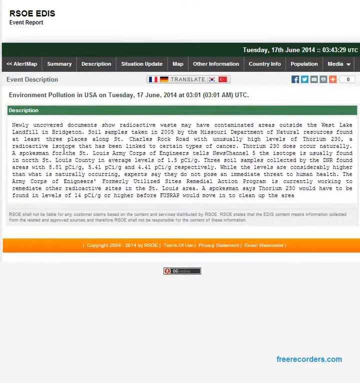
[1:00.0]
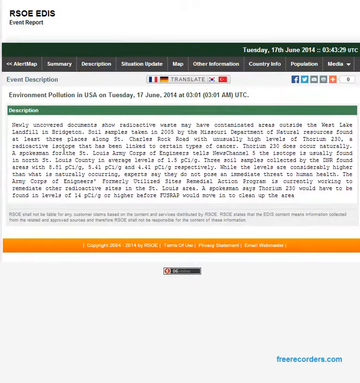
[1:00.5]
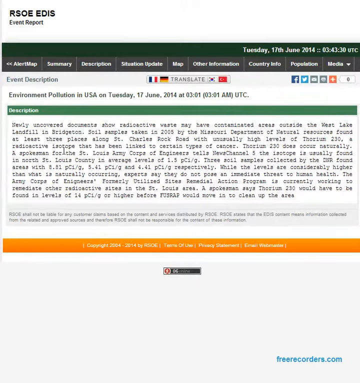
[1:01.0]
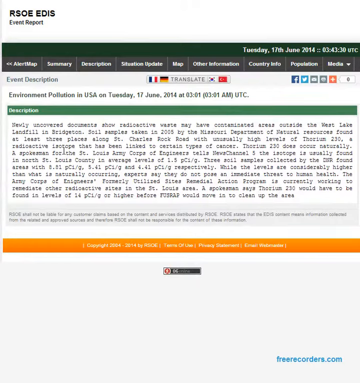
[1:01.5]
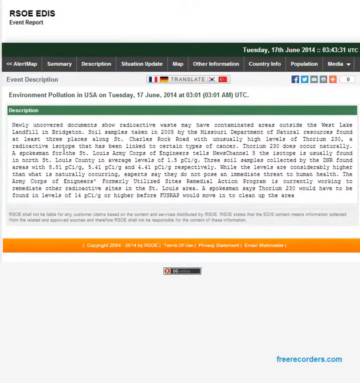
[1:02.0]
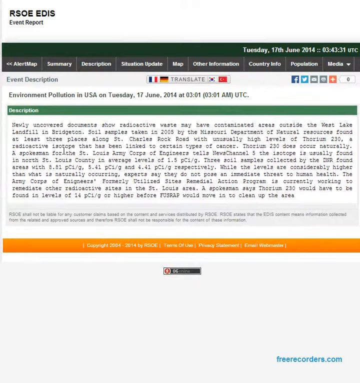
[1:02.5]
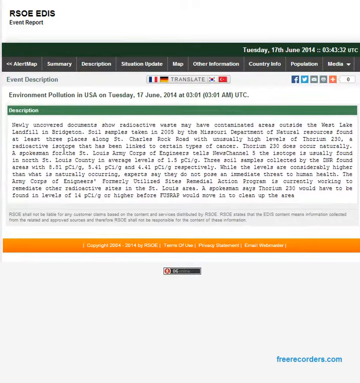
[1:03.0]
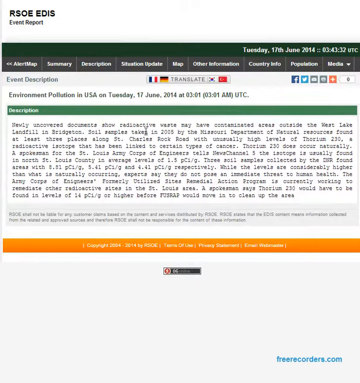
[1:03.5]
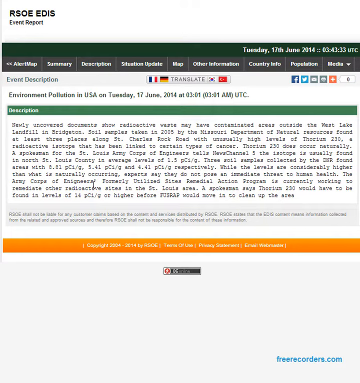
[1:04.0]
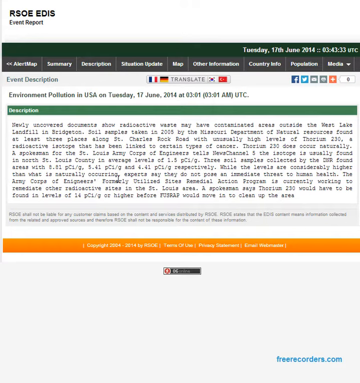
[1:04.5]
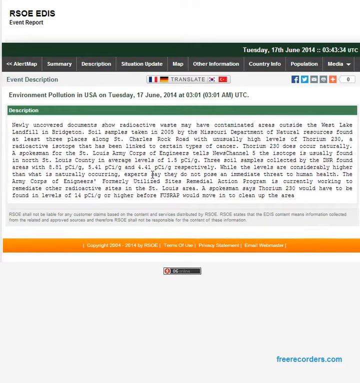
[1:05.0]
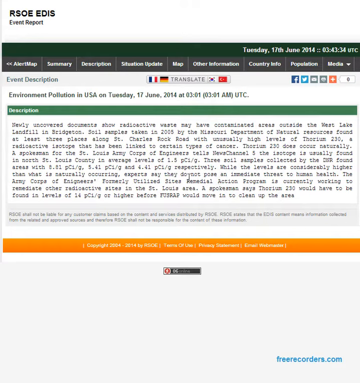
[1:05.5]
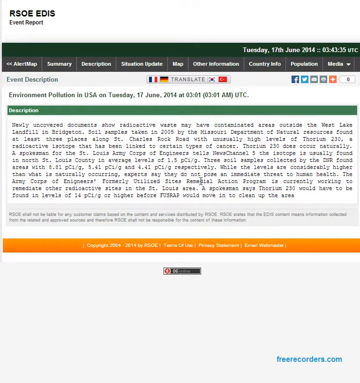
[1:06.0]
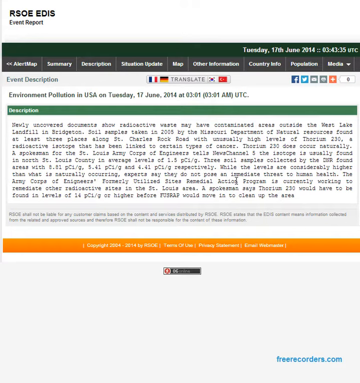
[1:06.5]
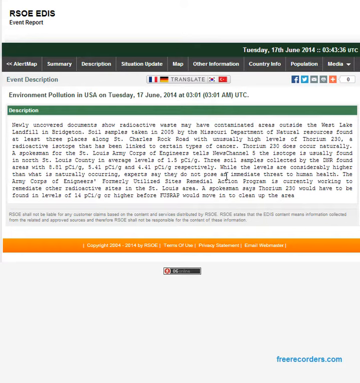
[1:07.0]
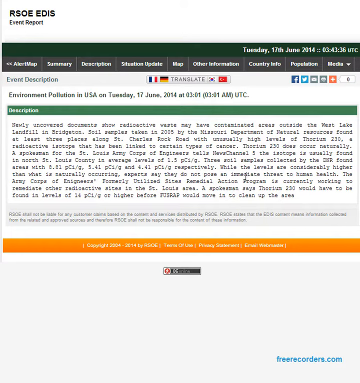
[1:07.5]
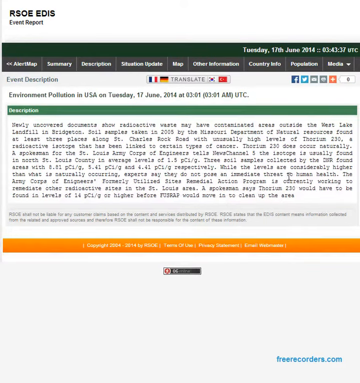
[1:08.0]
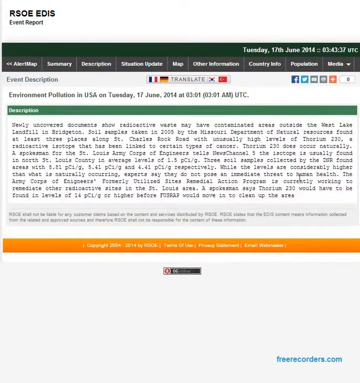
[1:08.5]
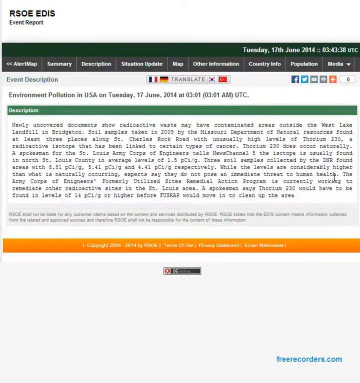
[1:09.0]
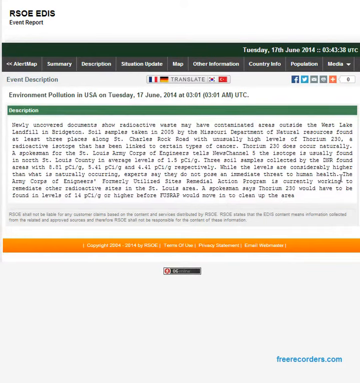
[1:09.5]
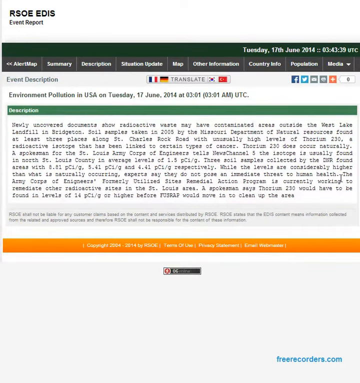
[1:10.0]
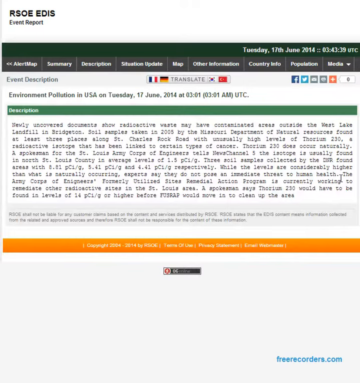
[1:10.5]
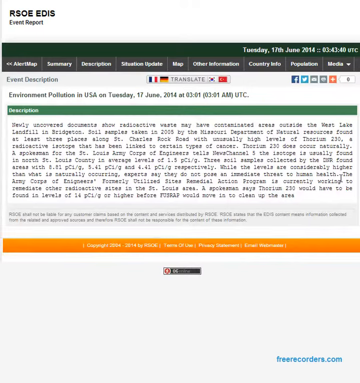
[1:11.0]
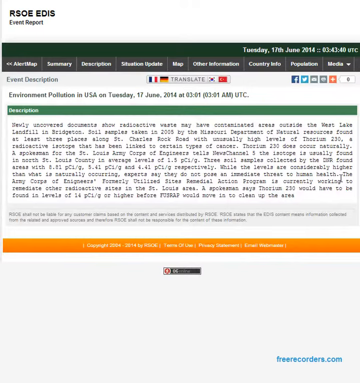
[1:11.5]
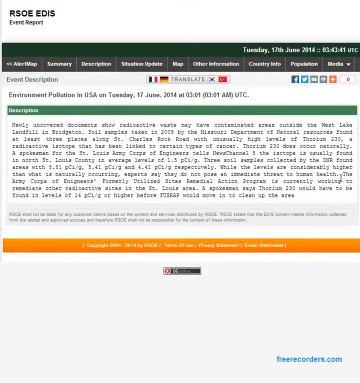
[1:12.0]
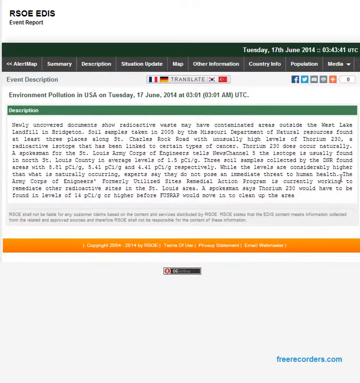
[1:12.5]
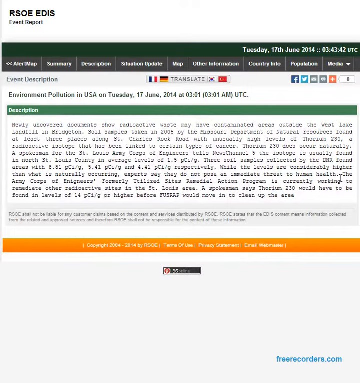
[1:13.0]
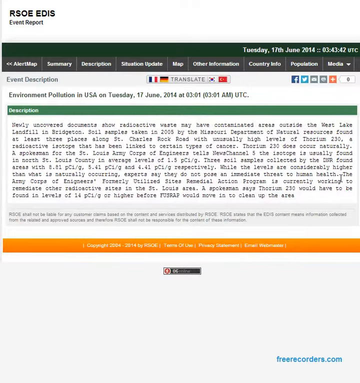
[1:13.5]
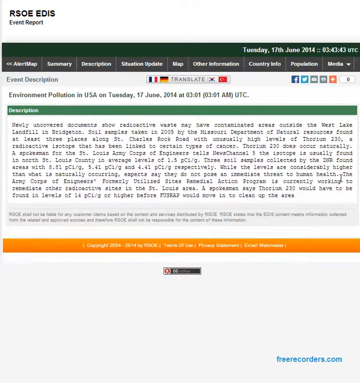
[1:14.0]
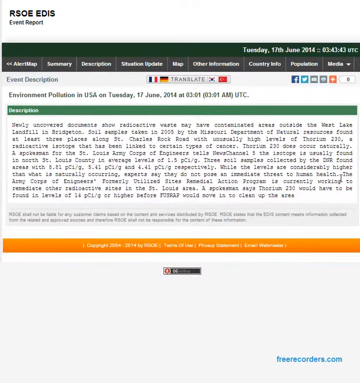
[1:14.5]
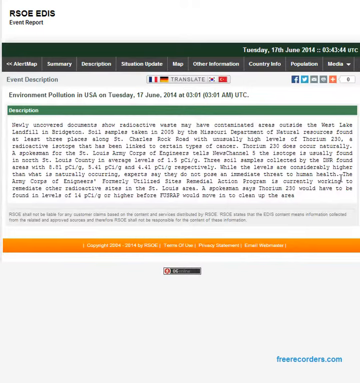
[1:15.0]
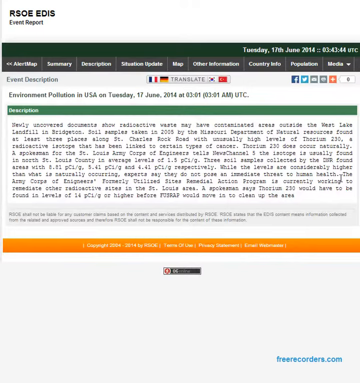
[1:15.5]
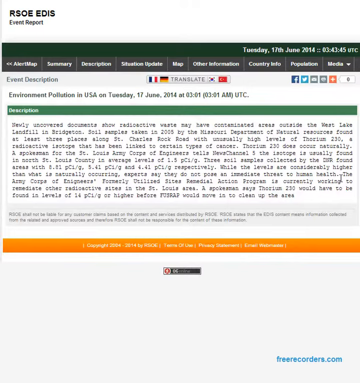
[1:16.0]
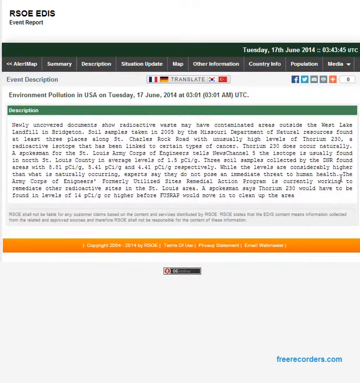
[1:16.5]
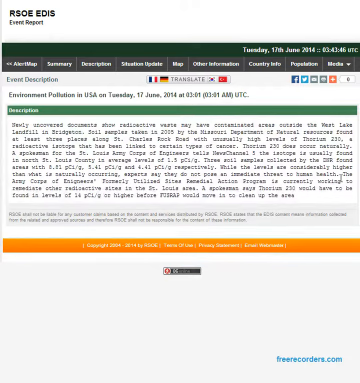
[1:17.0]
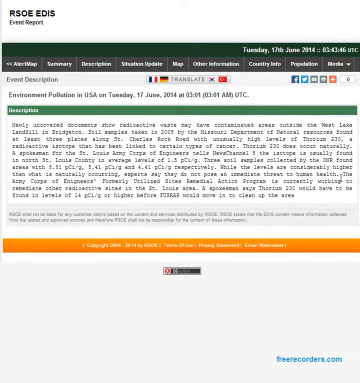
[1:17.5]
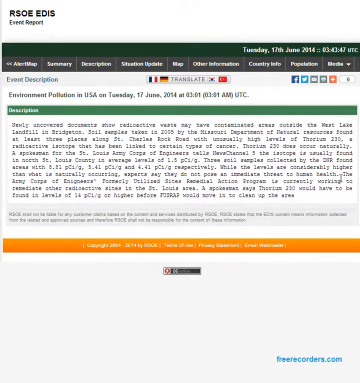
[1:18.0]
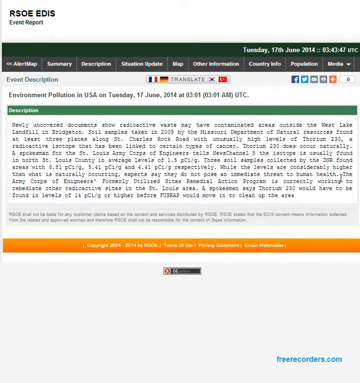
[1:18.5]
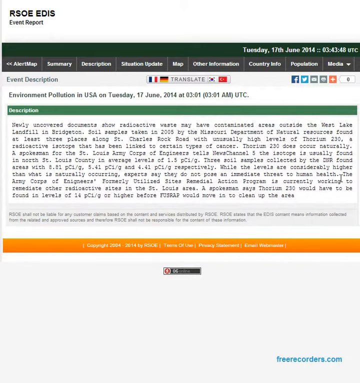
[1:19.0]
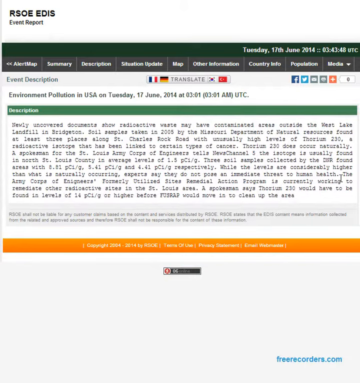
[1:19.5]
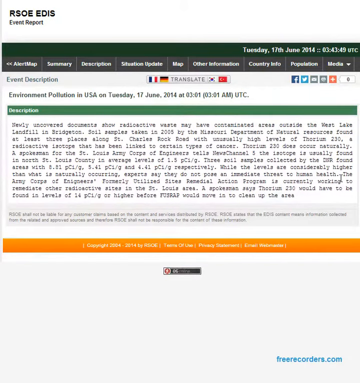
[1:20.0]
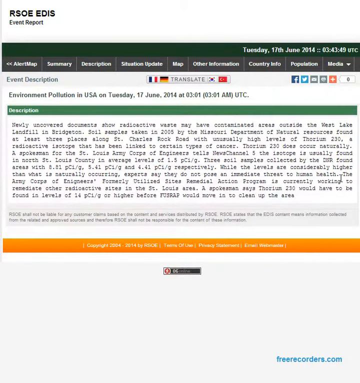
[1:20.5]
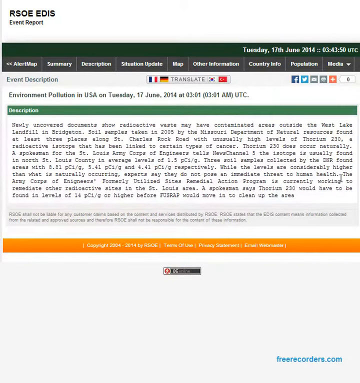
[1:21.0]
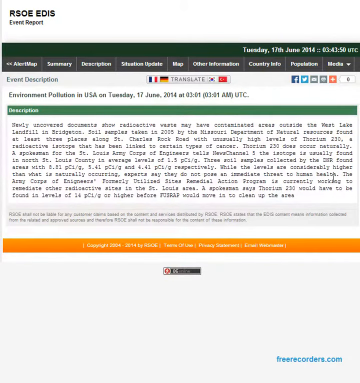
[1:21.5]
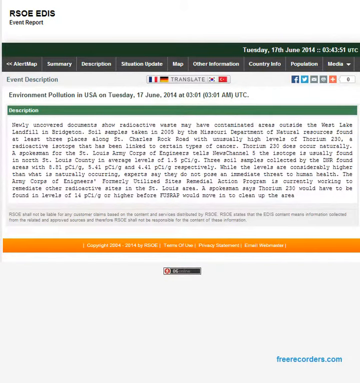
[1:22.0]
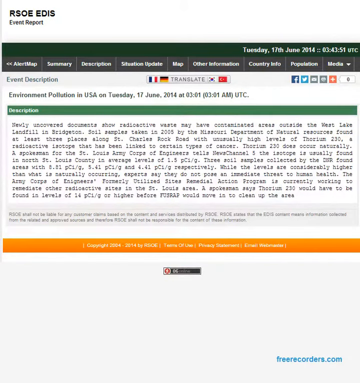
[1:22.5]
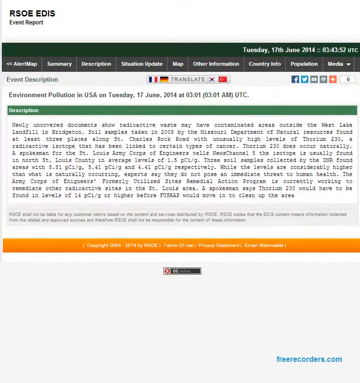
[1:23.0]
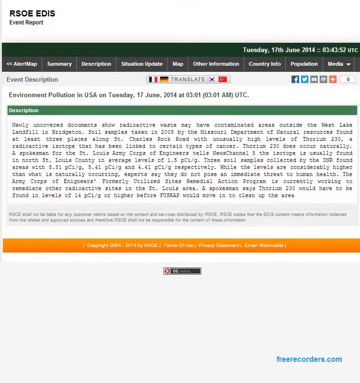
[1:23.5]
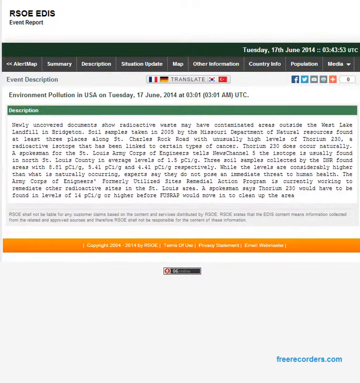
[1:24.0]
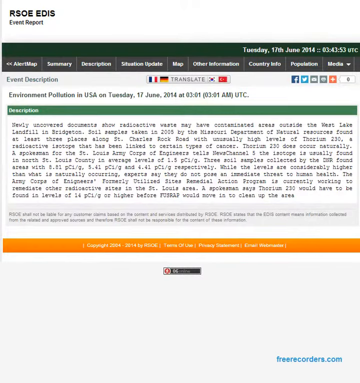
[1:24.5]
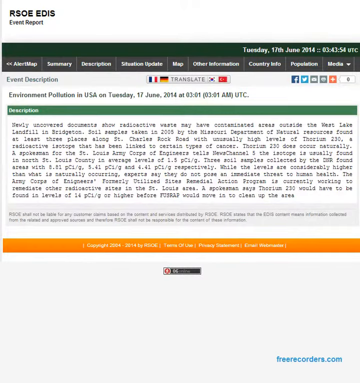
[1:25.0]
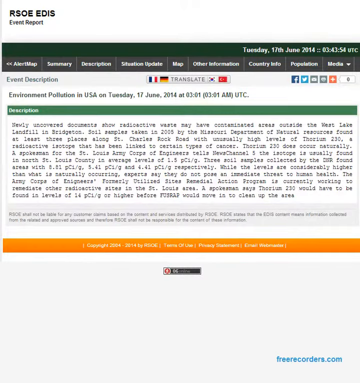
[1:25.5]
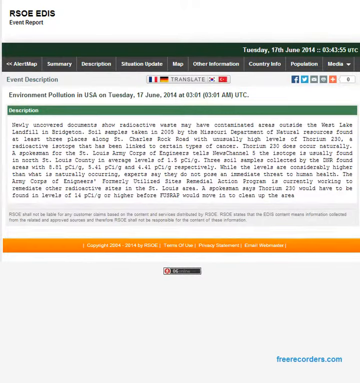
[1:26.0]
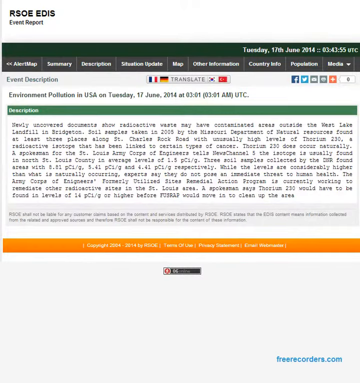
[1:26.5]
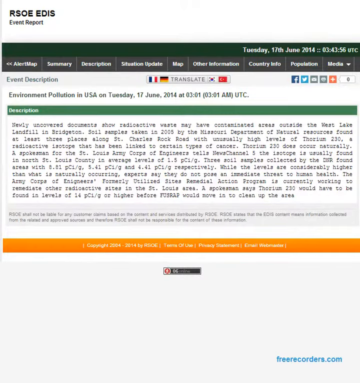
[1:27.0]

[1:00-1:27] The SOE Edis event report site has several sections that can be opened: event report, alert map, summary, description, shadowbox, update map, other information, country info, population type and media. It shows environmental pollution in the USA on Tuesday 17th June 2014 at 3am, along with the description. At the bottom is an orange rectangle with other things to click, "free rarecoders.com" in blue font, and links to sites such as Facebook or Twitter. Flags of France, Germany, South Korea and China can be clicked to translate the description.